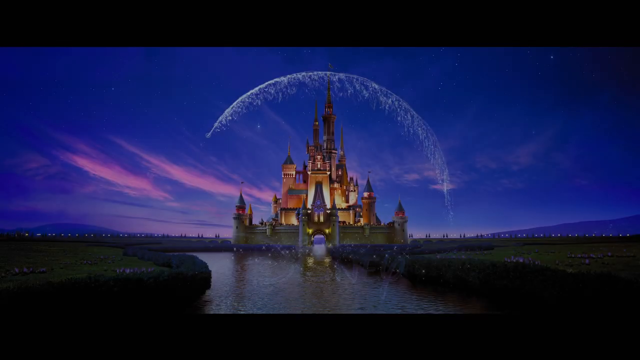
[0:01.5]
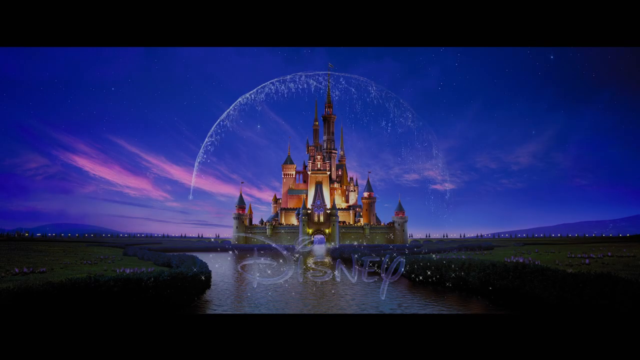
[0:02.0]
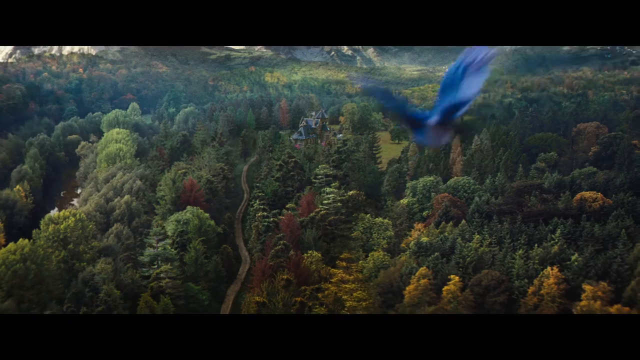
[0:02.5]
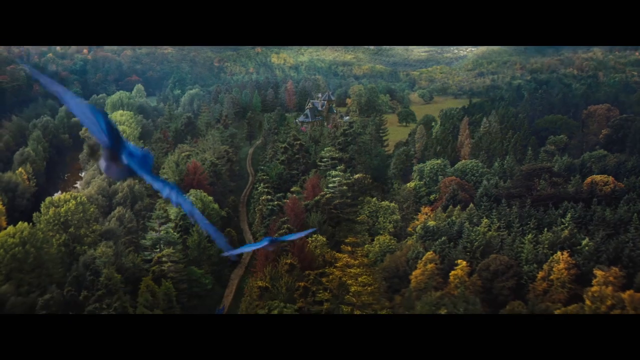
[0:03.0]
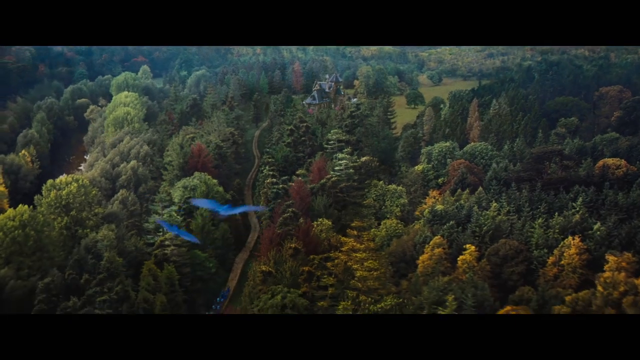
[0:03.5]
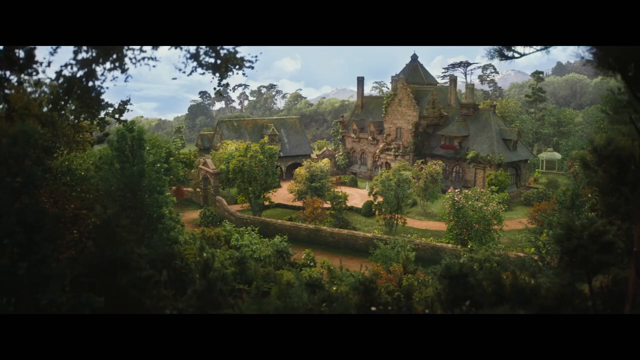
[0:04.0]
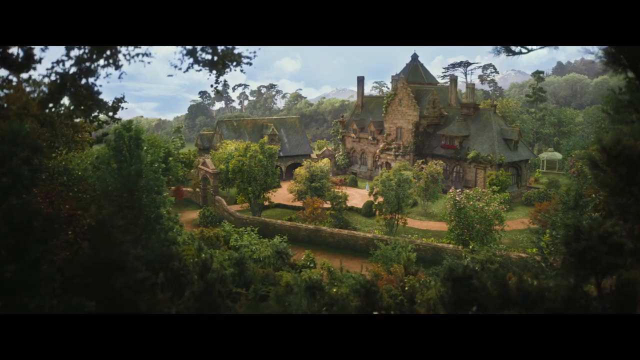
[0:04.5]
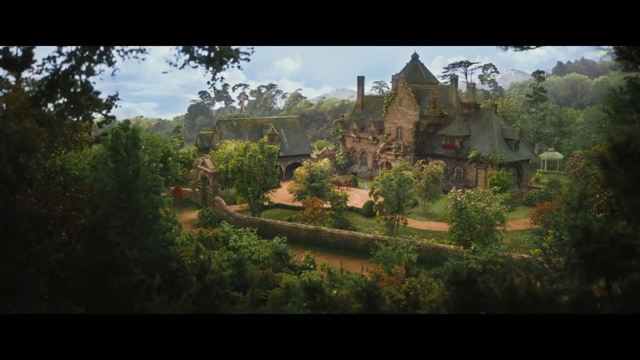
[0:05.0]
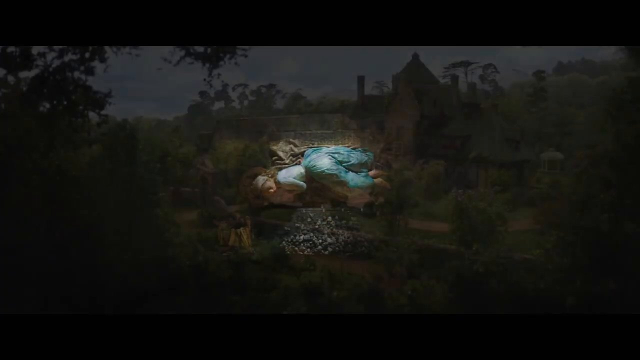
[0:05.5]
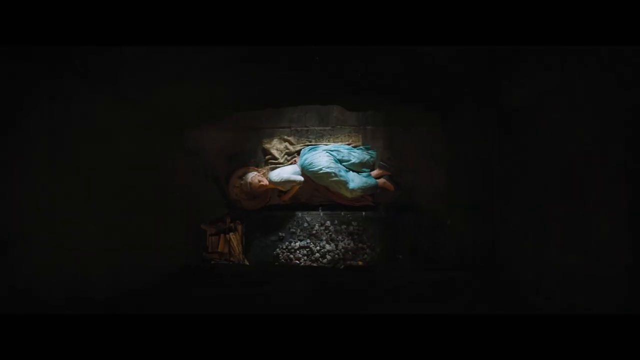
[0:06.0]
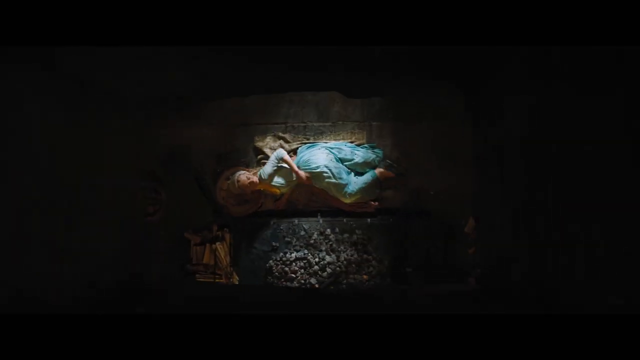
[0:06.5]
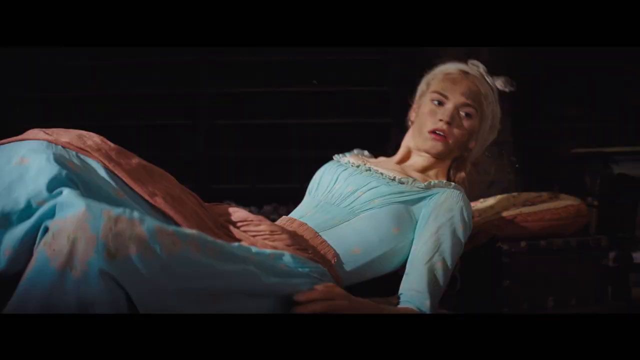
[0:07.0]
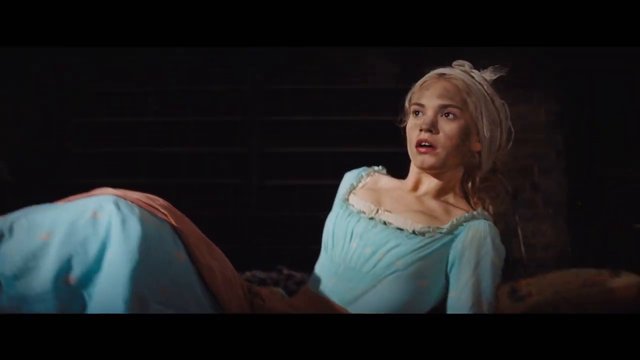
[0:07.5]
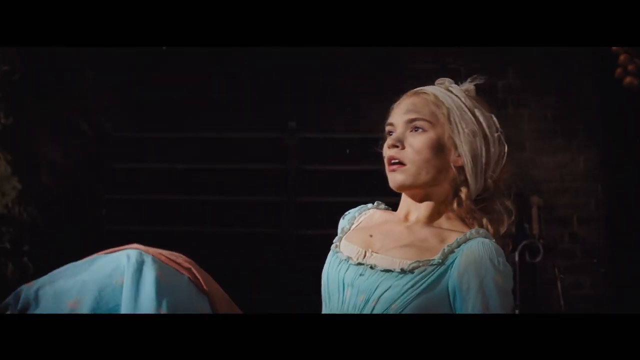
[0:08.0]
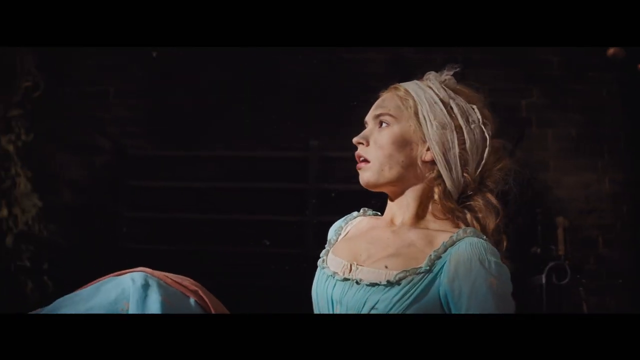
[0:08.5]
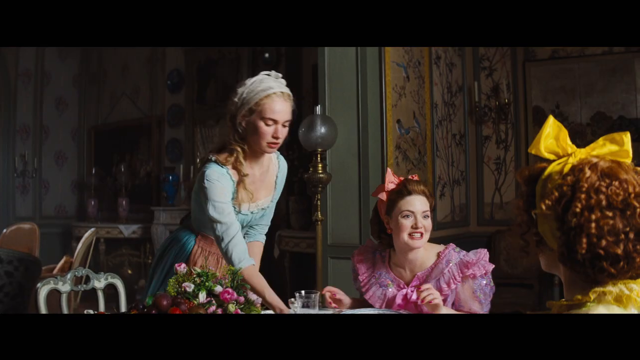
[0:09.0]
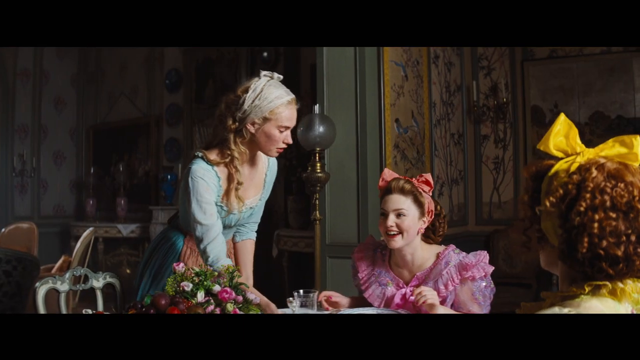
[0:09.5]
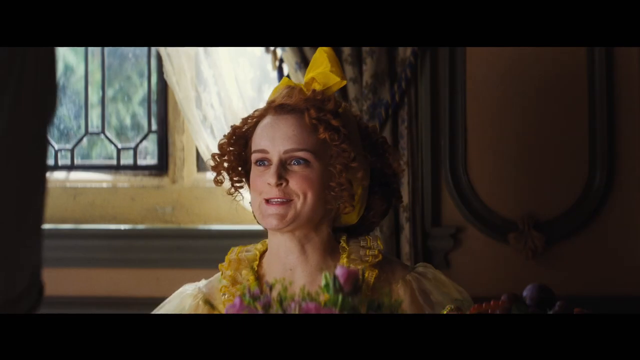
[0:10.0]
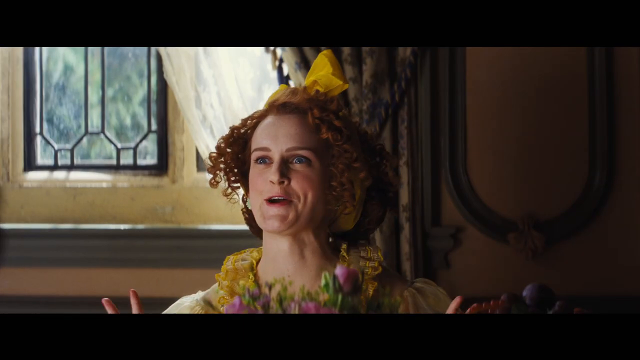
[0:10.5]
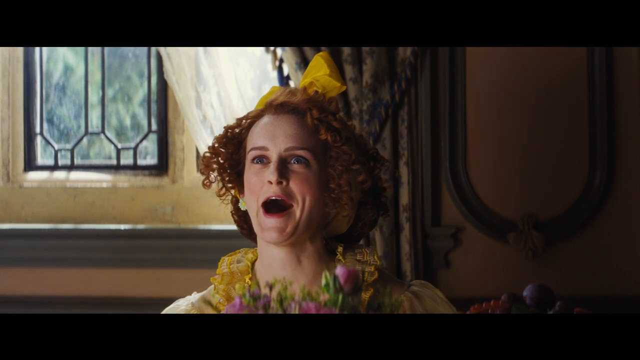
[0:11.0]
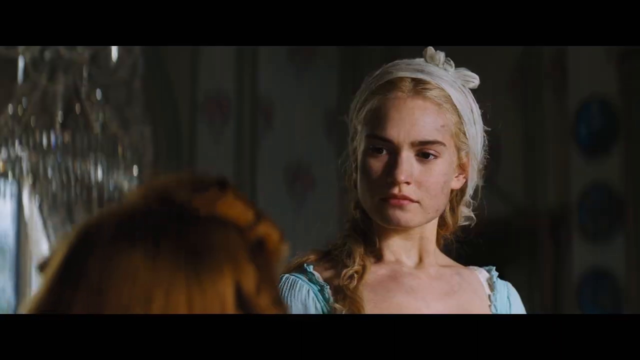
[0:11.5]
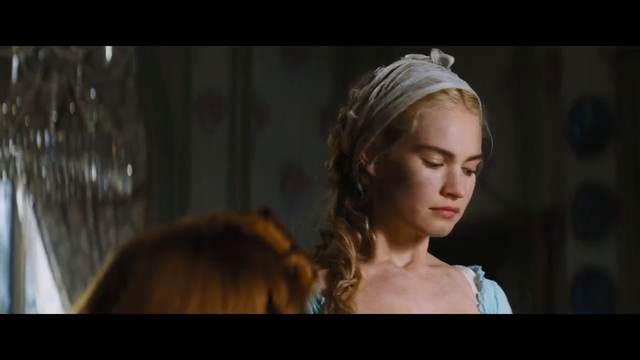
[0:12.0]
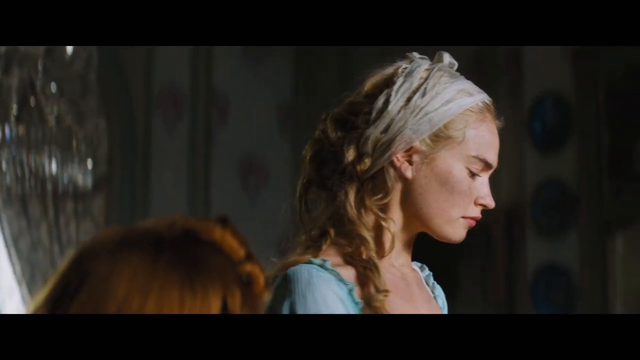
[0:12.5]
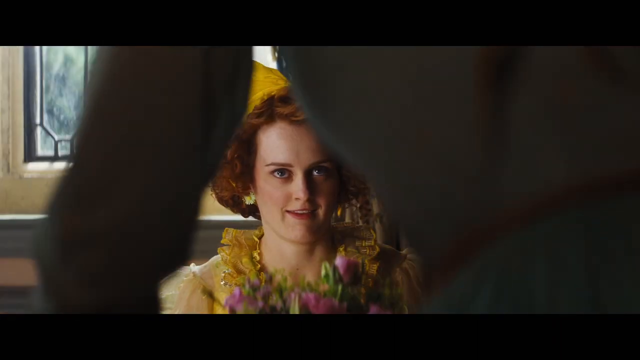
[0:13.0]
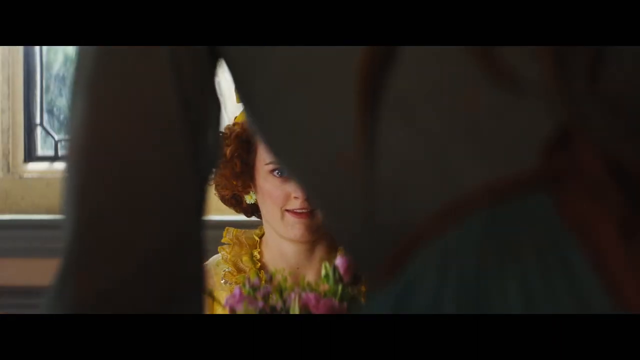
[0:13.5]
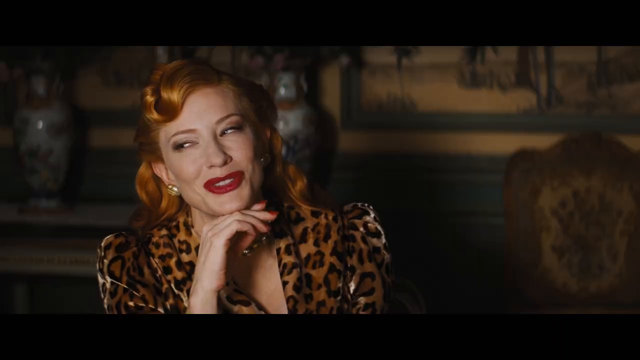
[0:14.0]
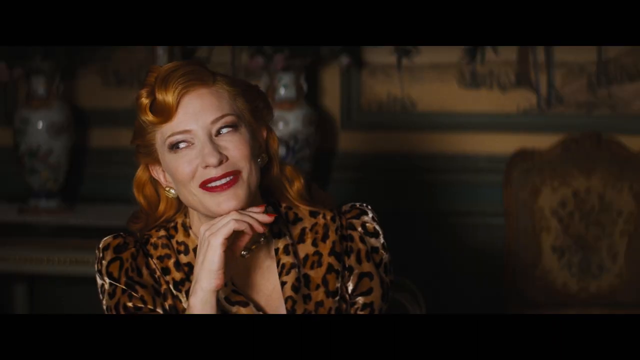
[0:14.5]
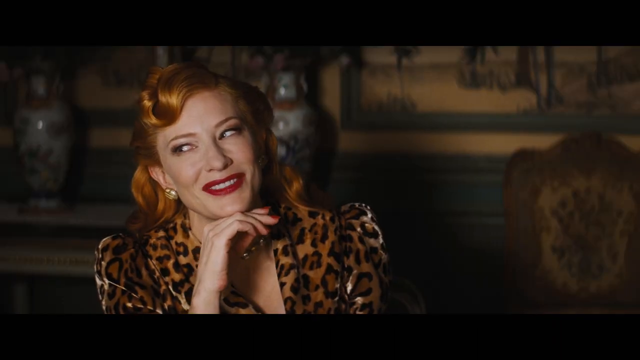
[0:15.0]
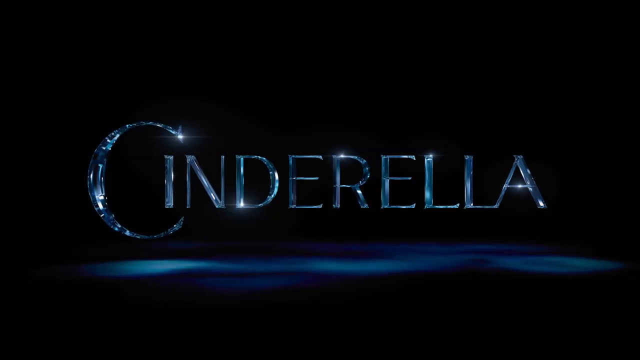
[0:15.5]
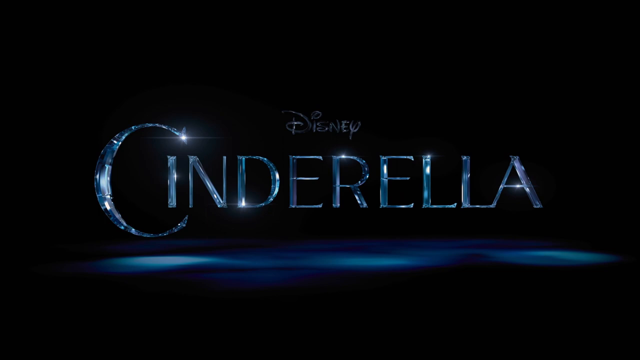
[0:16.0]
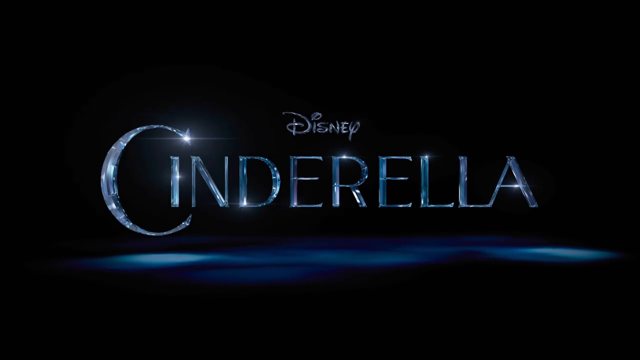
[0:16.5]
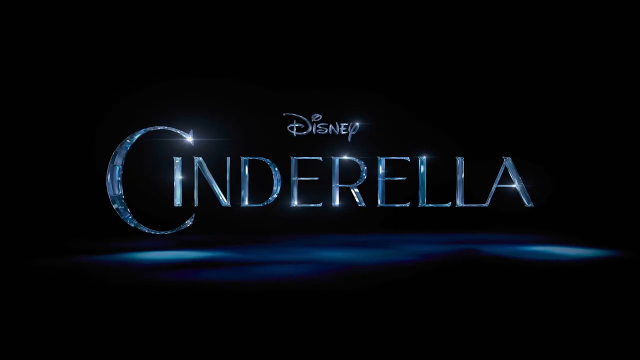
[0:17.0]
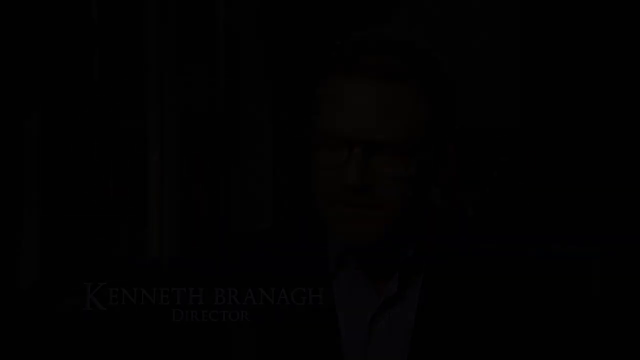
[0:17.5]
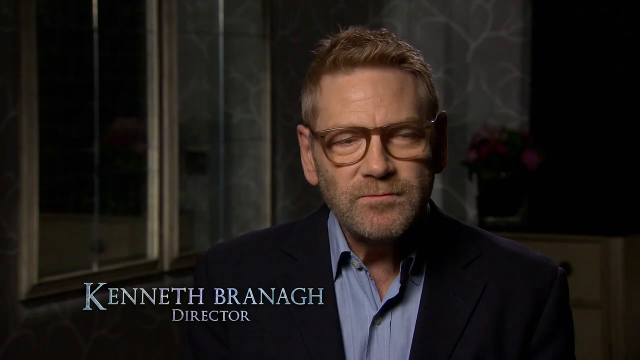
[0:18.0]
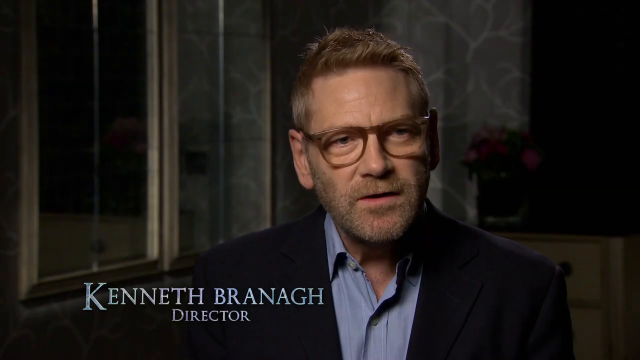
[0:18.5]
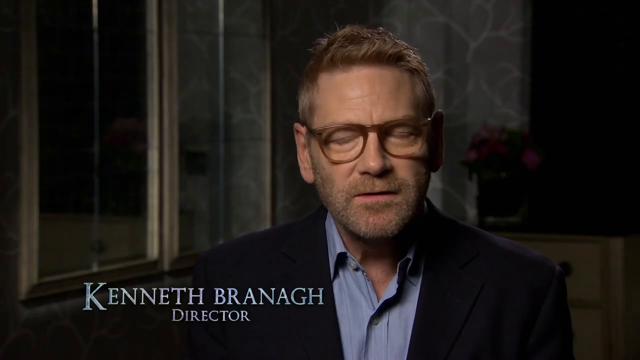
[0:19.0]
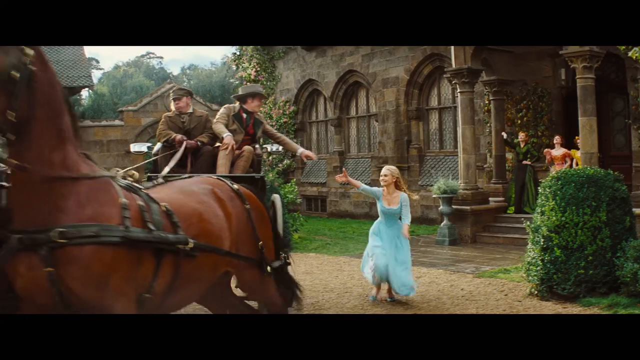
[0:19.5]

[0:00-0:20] The video consists of clips from a movie, Disney's Cinderella. A very beautiful blonde girl with long blonde hair wears a blue gown. She is also seen in a dirty gown, doing all the work while her sisters and her mother make fun of her. The director of the movie, Kenneth Branagh, is seen. There are several trees around the house. The stepsisters appear in a room: one has coily hair with a yellow bow tied on her head and wears a yellow gown, while the other wears a pink gown with a peach bow on her head. Their mother is dressed very beautifully in an animal-skin-like material.